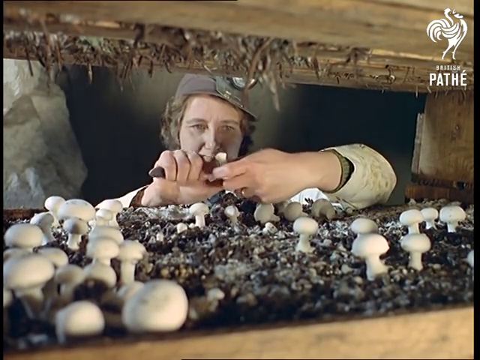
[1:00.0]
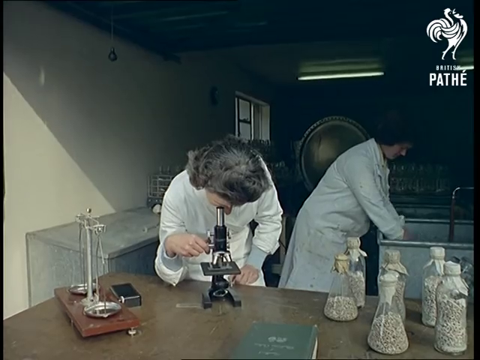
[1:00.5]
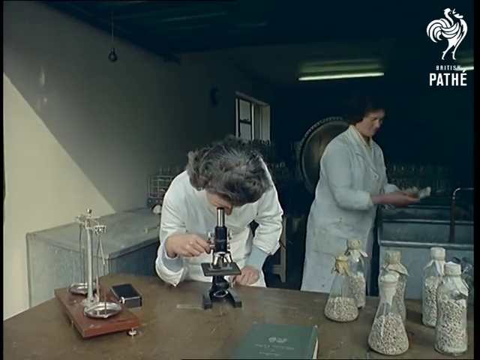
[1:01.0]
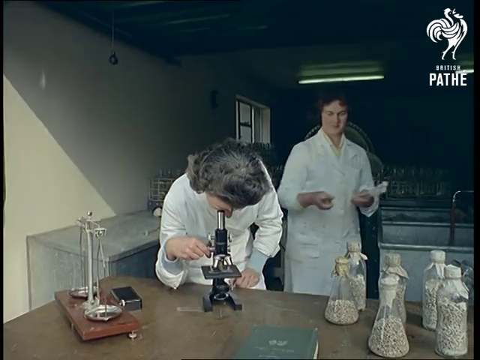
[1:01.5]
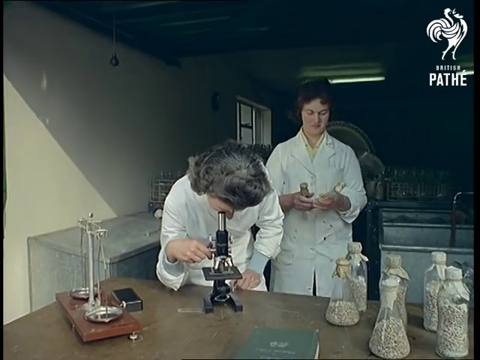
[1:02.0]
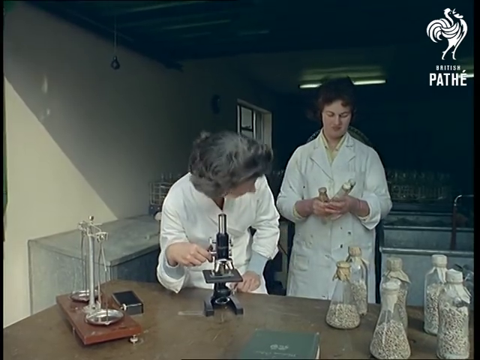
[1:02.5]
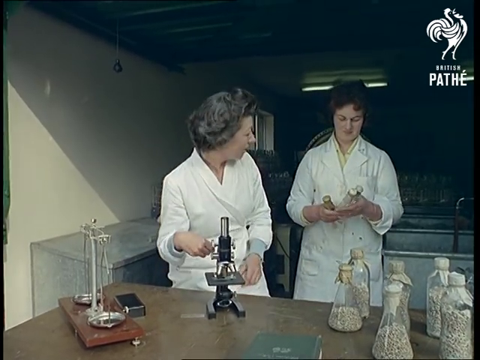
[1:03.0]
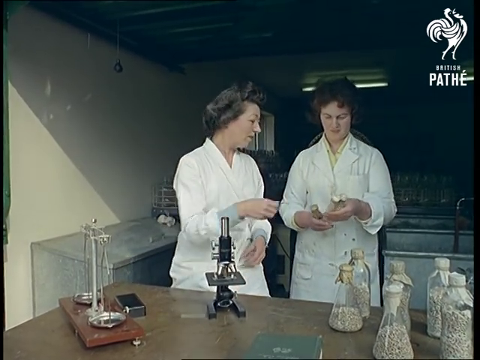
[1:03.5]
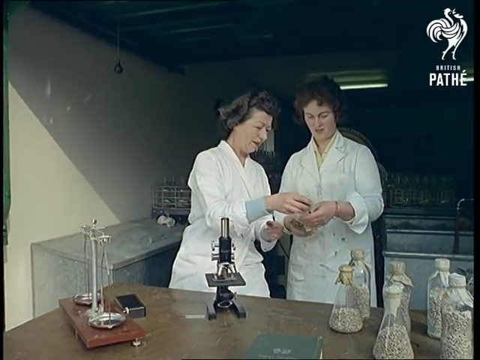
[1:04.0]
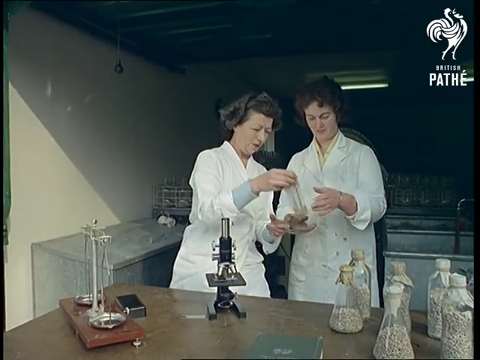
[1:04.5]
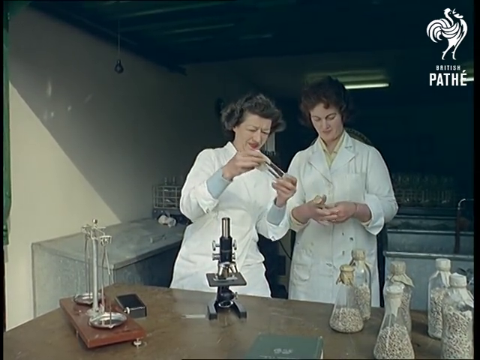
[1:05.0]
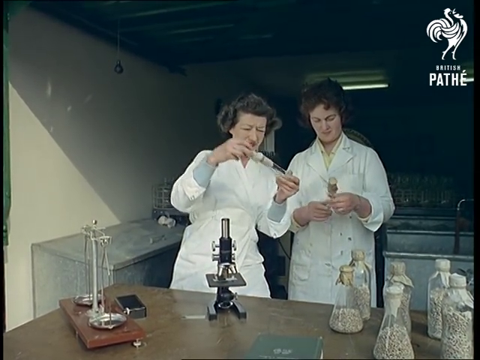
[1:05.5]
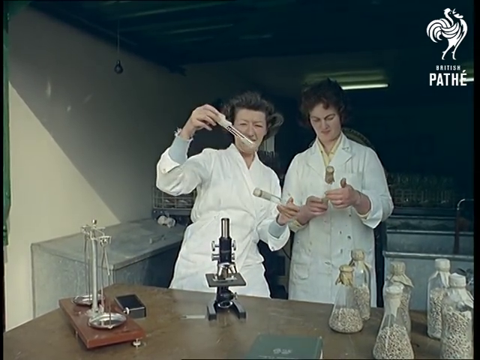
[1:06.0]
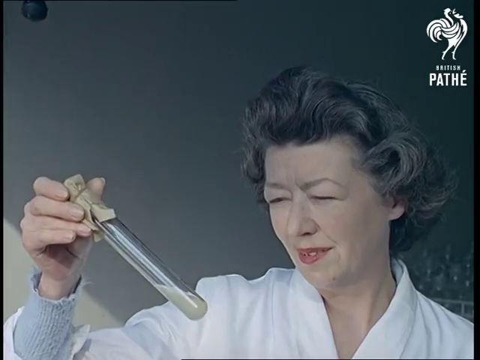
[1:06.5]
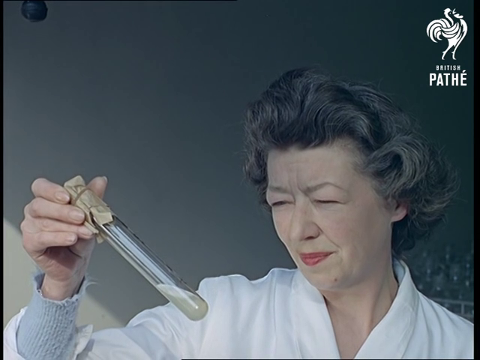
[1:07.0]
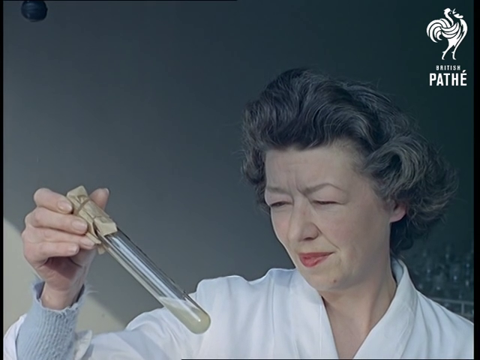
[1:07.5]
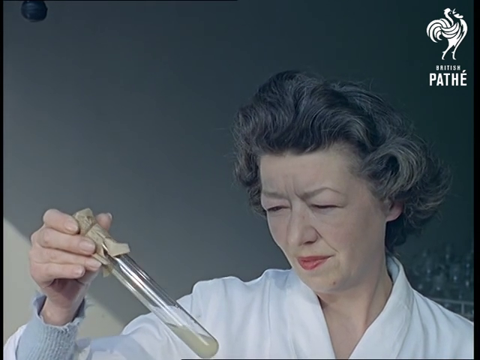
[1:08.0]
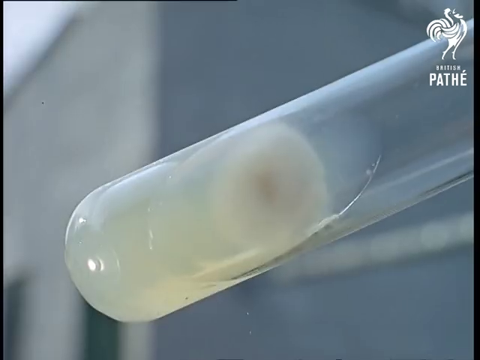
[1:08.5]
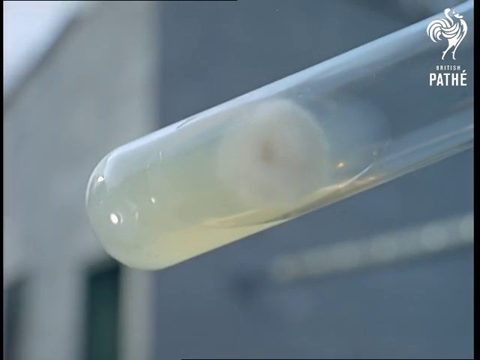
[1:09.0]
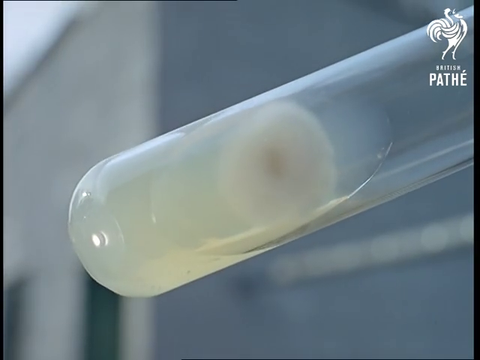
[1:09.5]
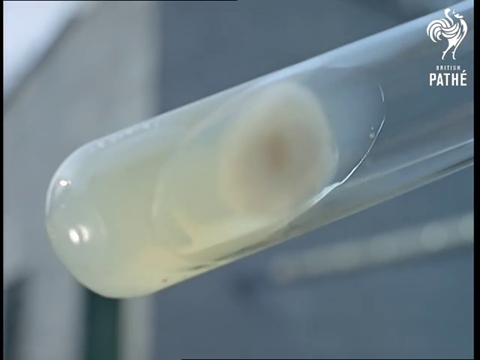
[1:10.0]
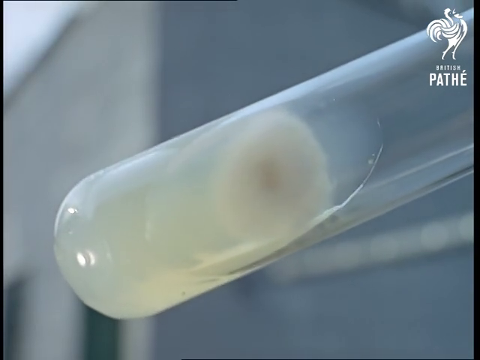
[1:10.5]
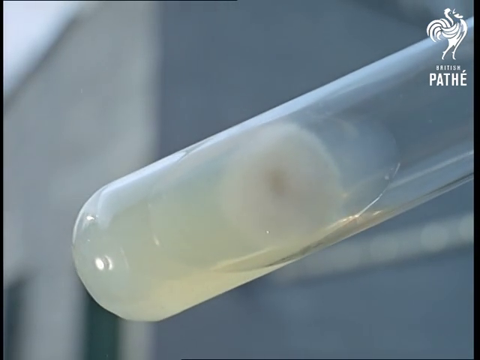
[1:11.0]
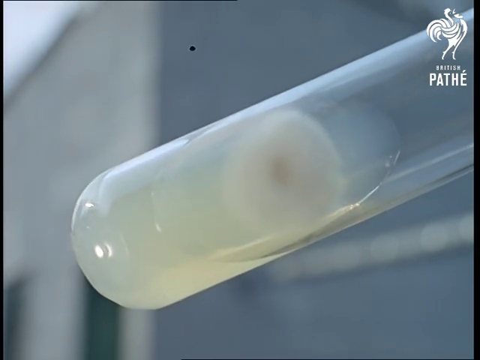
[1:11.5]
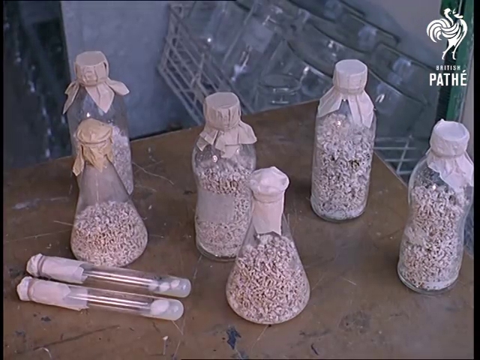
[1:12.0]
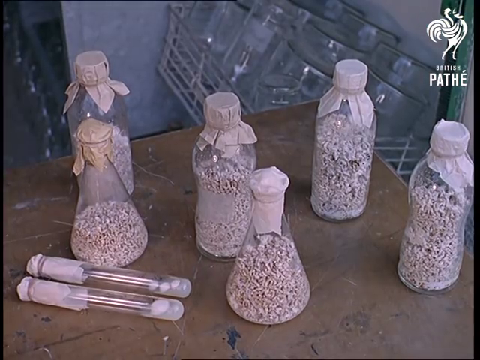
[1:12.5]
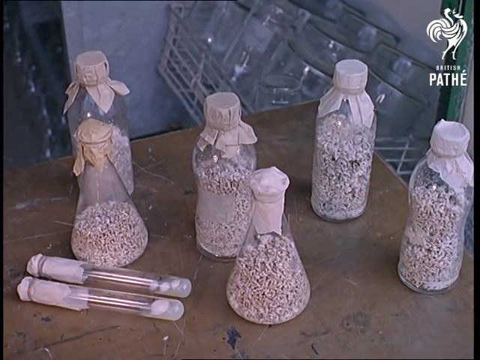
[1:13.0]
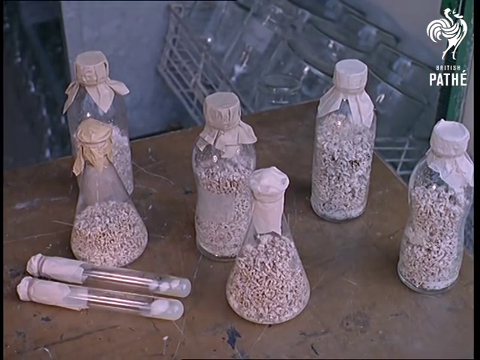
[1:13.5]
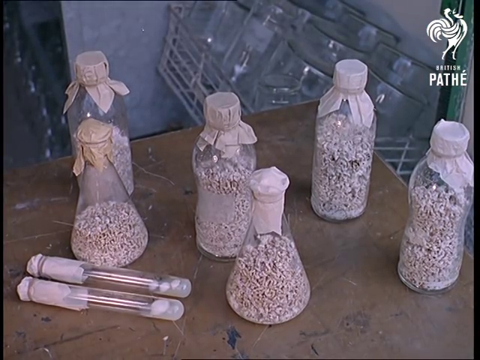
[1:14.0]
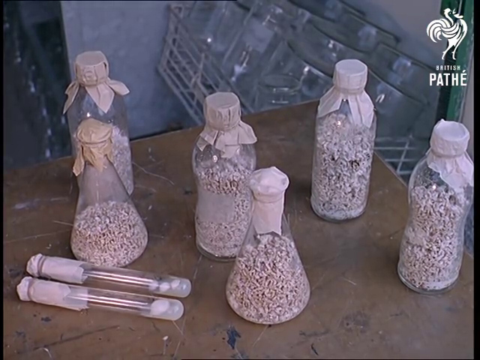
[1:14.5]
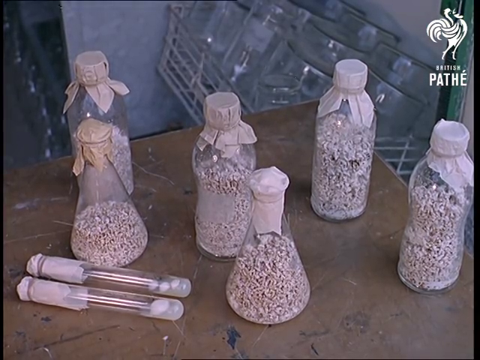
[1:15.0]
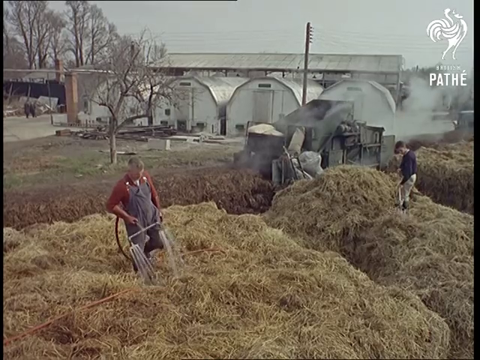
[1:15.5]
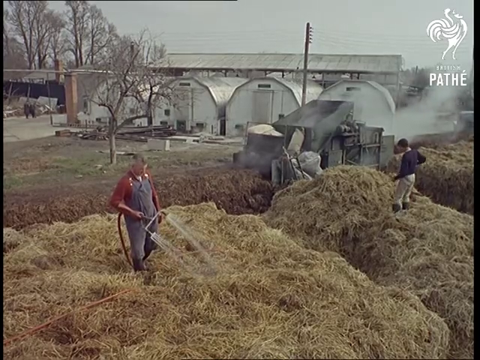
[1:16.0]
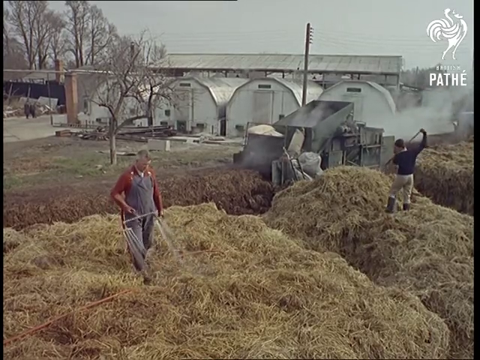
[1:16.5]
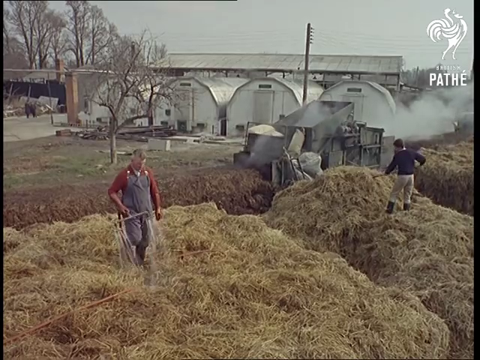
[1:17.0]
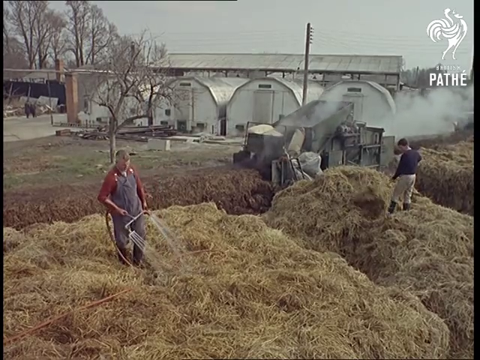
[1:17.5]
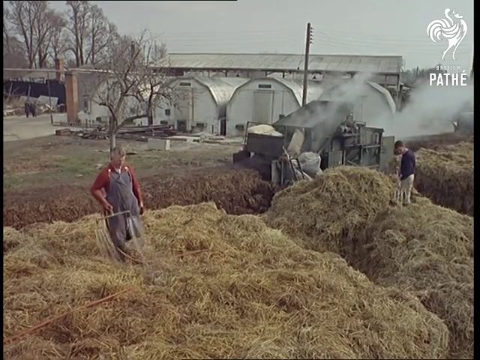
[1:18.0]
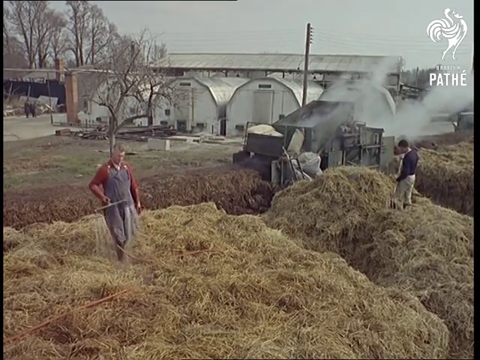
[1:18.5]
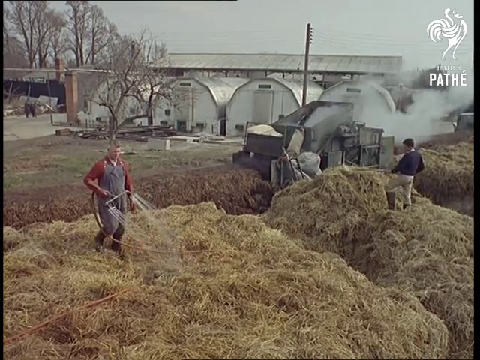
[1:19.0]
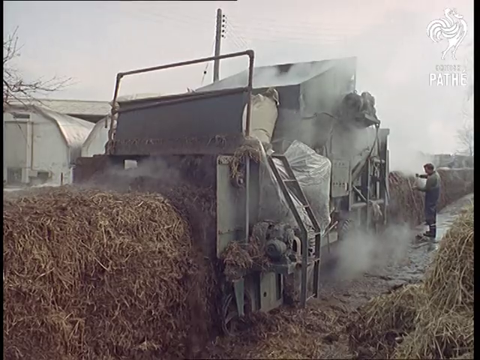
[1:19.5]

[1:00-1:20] The women seem to be examining the quality of the mushrooms: they put some in a Petri dish and examine the color and size. The mushrooms are then shown packaged in little glass containers of different sizes, along with tiny chips of mushroom that apparently were cut up. The scene moves outside to a farm where several men water their crop. Two men, one in a black shirt and one in a red shirt, work with haystacks using a pitchfork and water the hay. The man in the red shirt wears overalls. Four greenhouses are in the background, and the scene looks more modern than the scenes of the women in the cave.